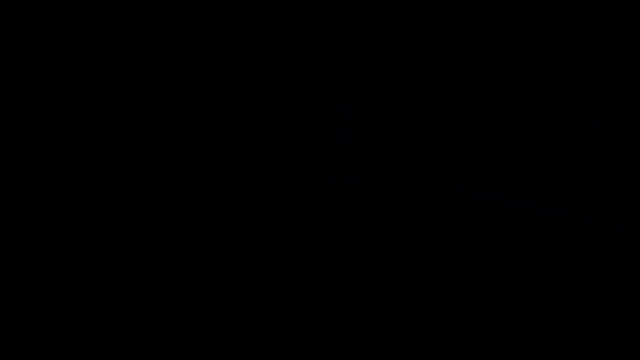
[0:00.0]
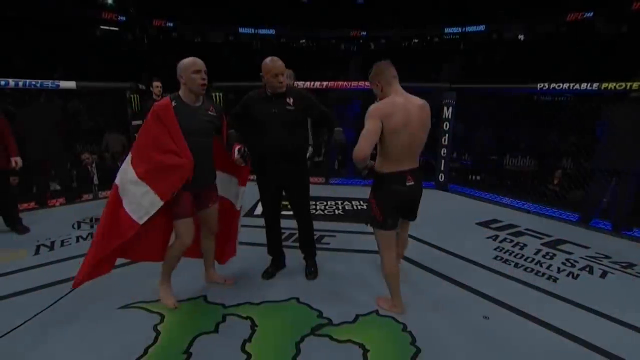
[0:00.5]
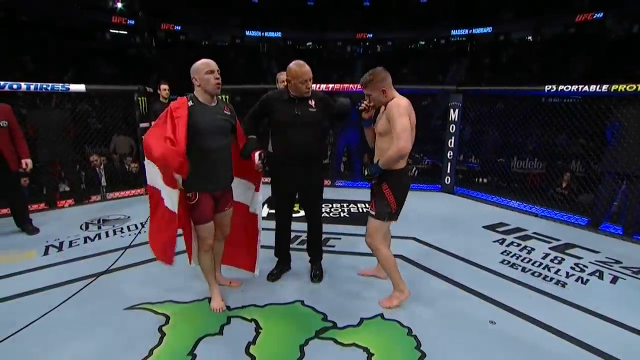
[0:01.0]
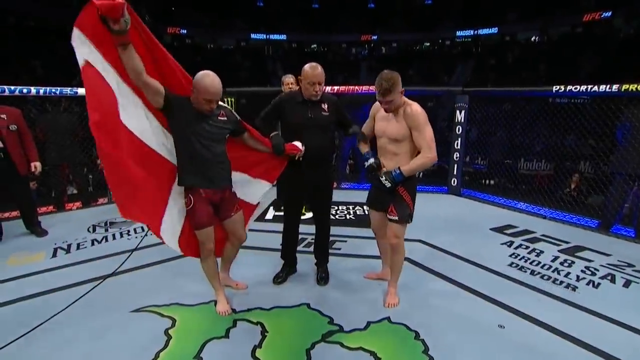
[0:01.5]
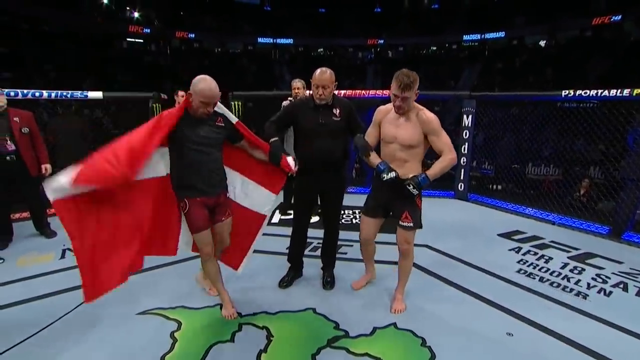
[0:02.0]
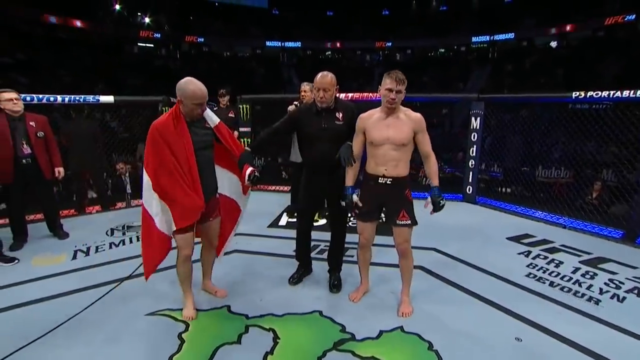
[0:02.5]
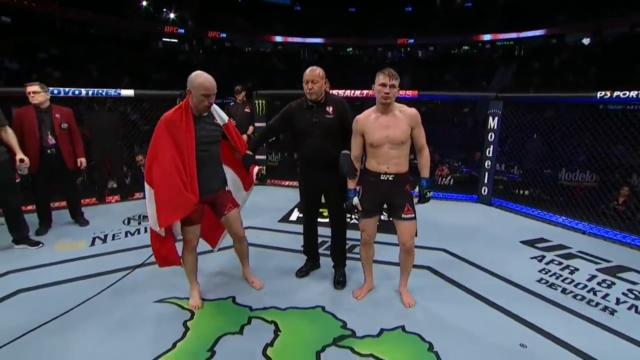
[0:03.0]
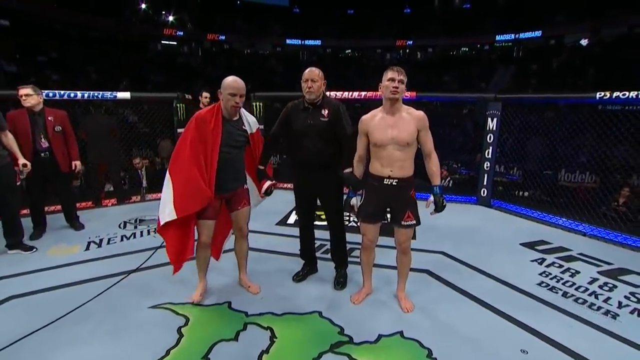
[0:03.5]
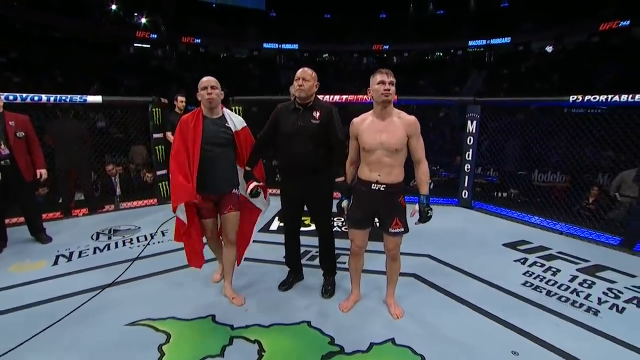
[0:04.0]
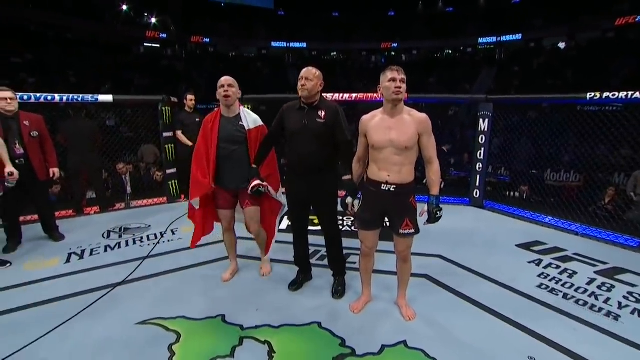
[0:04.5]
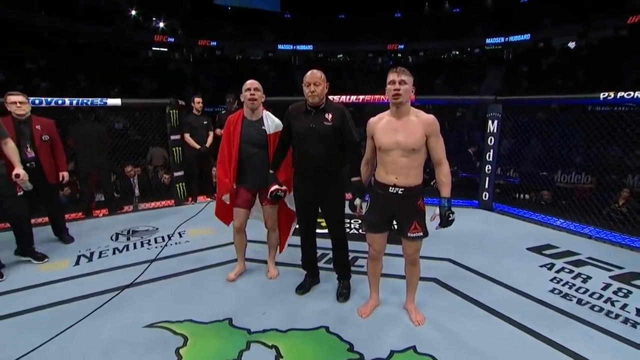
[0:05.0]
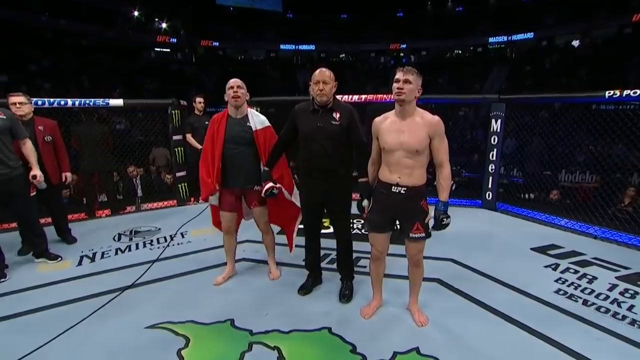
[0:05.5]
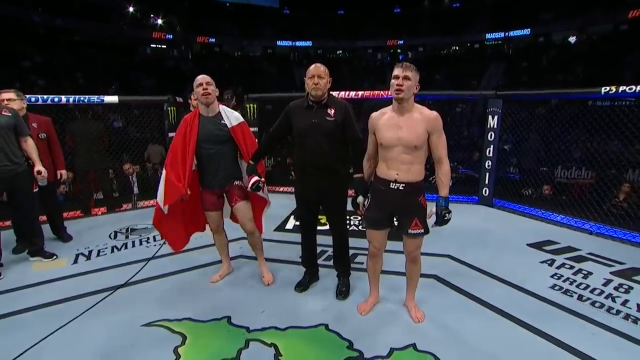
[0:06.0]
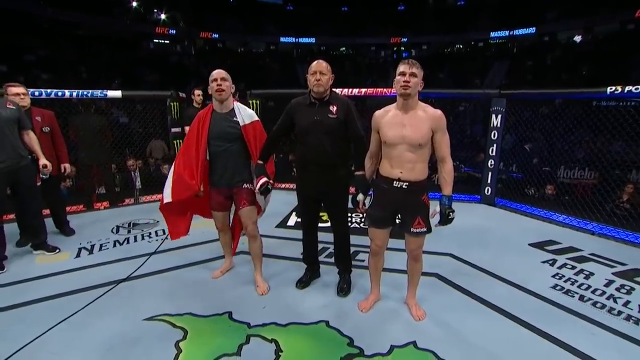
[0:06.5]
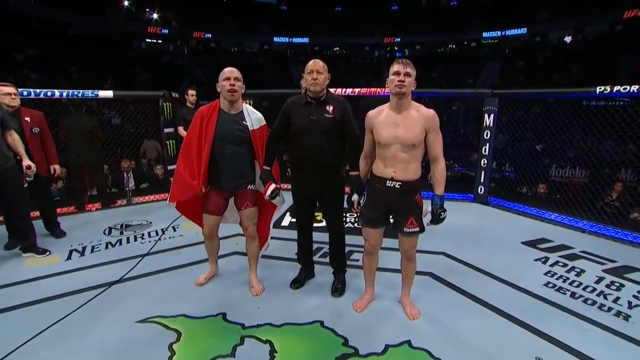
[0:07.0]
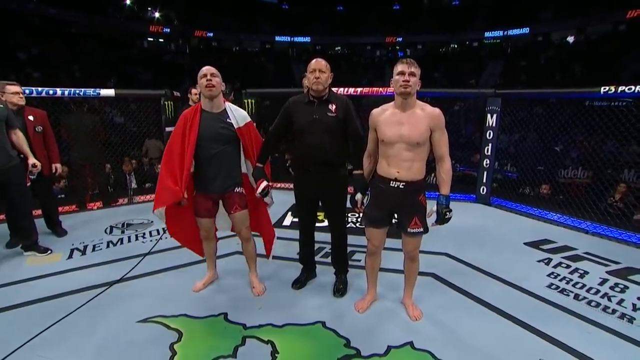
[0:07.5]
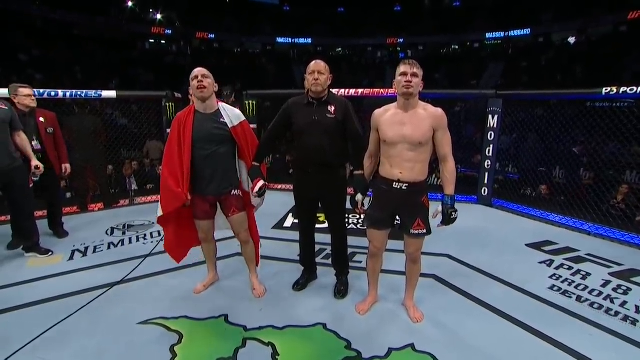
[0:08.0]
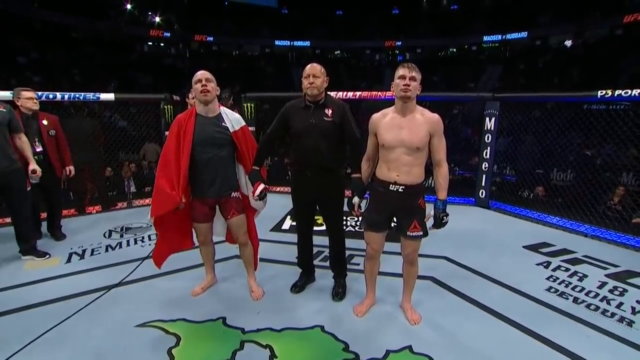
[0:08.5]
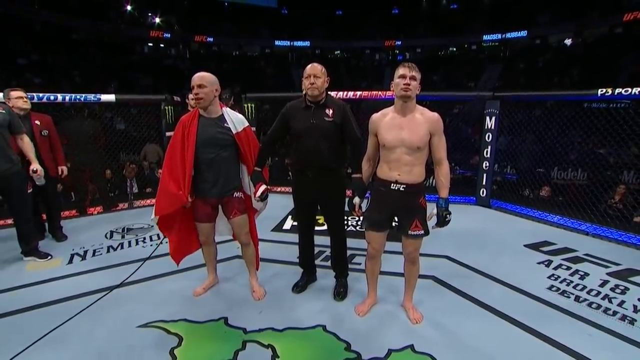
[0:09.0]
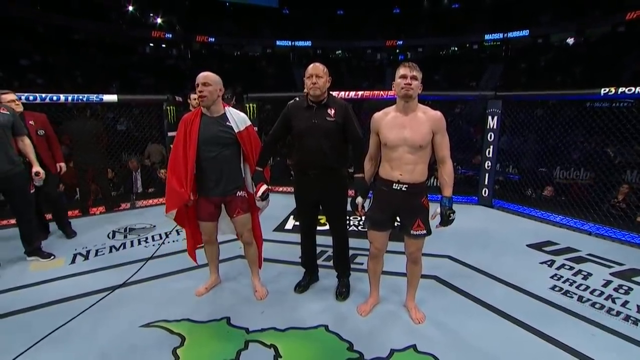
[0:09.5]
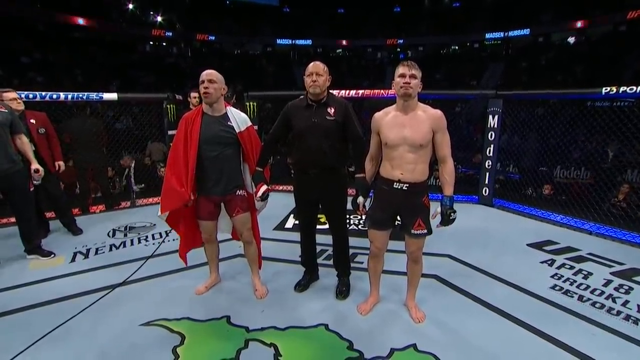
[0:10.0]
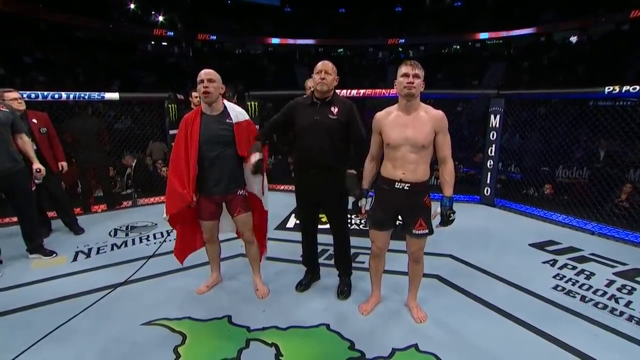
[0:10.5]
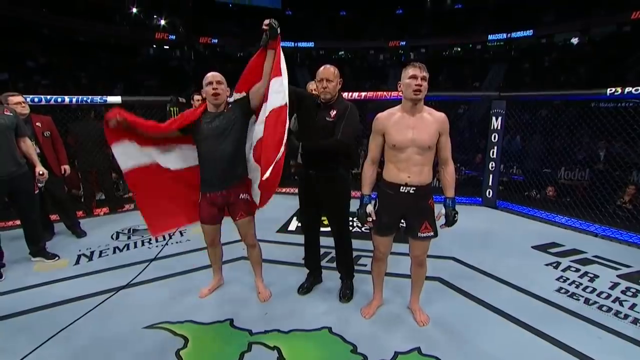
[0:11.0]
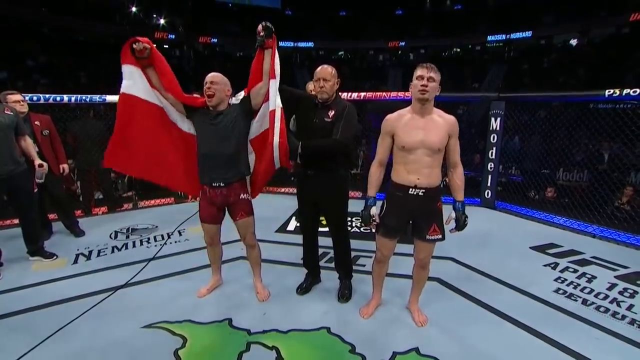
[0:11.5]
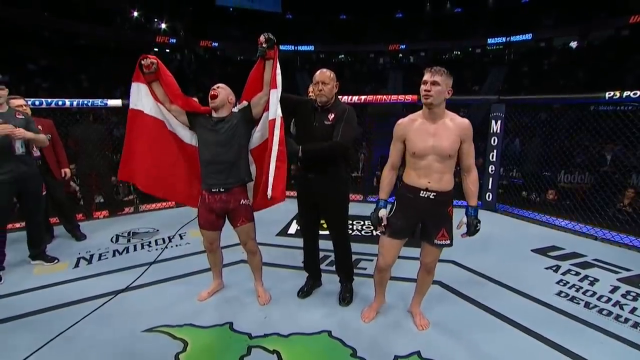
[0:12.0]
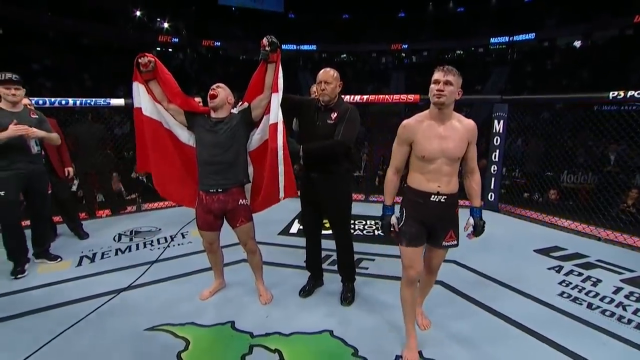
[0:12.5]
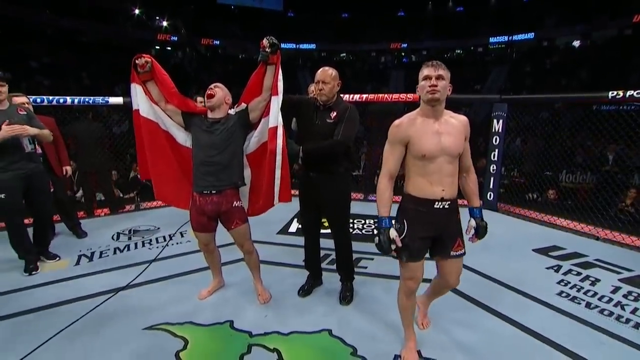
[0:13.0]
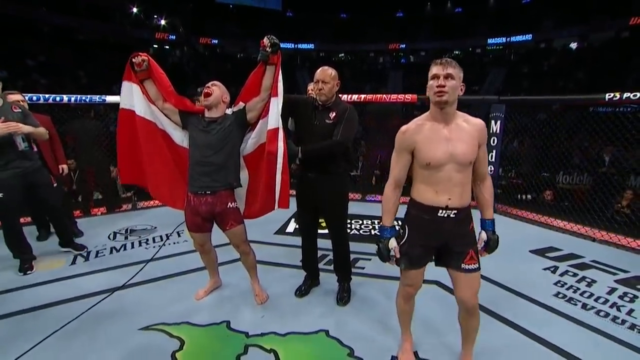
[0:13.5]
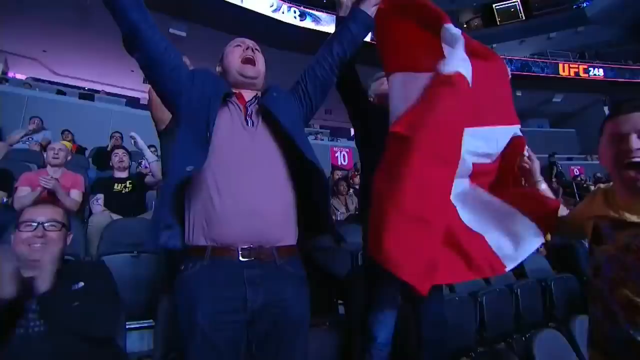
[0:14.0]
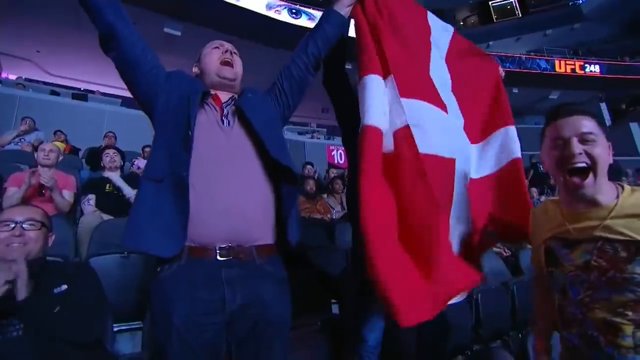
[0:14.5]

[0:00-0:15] This appears to be the end of a UFC fight. Two combatants stand with a referee between them. The fighter on the left wears a black shirt and has a country flag draped around his shoulders. The referee is dressed fully in black, and to the referee's left is the other combatant, who wears no shirt, just black trunks. They wait for the decision, which apparently goes to the fighter on the left with the flag around his shoulders. The referee raises his right arm for him, and the man is very happy and lets out a joyful shout. The bare-chested man on the right is not happy, though not angry either; he is simply not pleased.